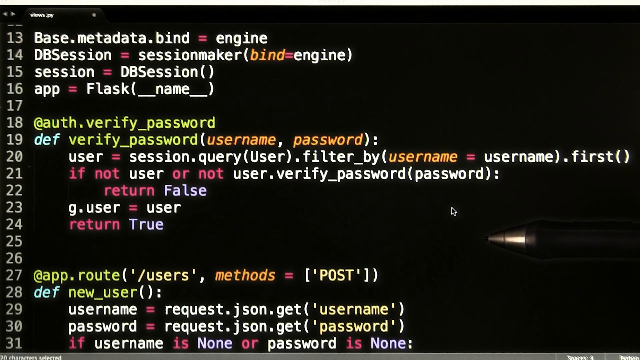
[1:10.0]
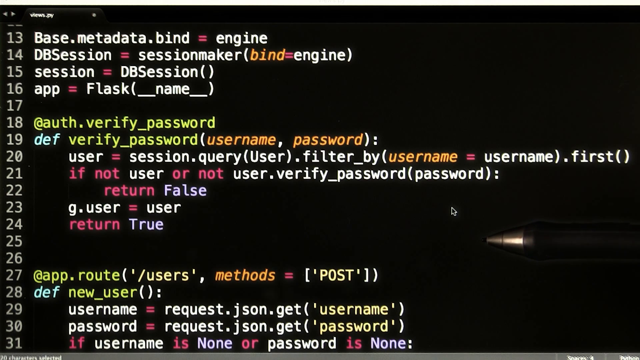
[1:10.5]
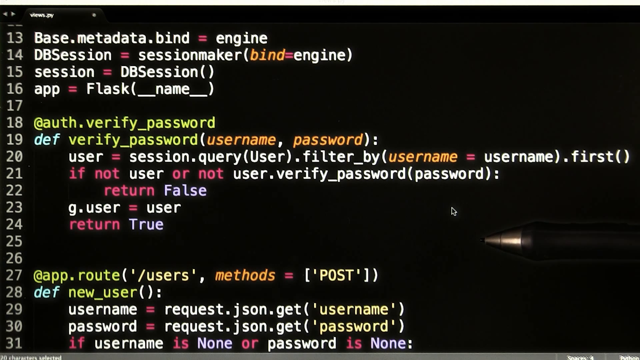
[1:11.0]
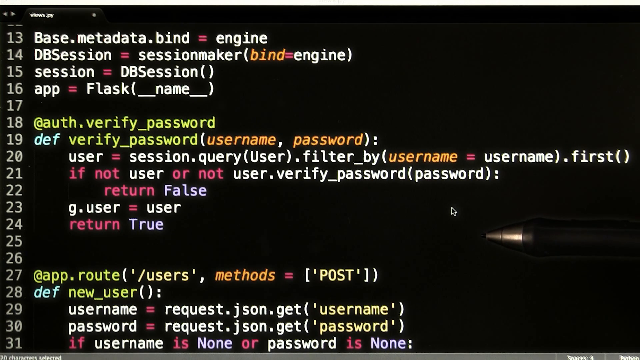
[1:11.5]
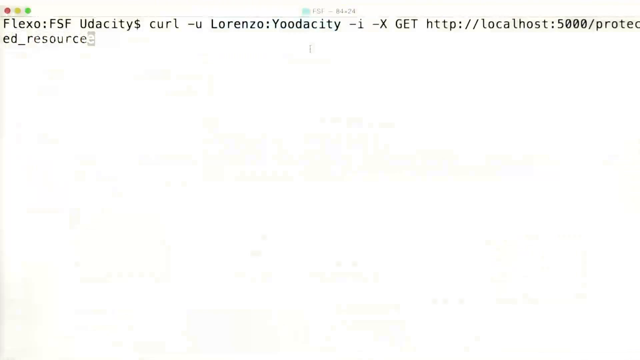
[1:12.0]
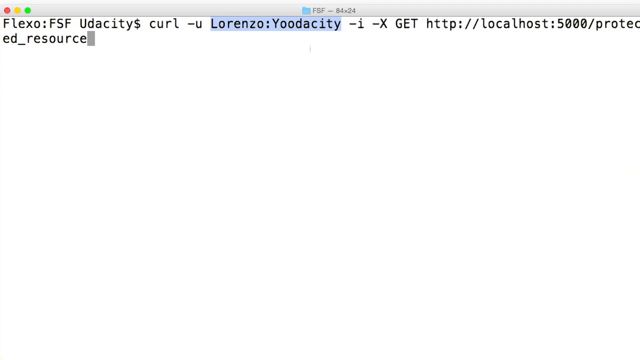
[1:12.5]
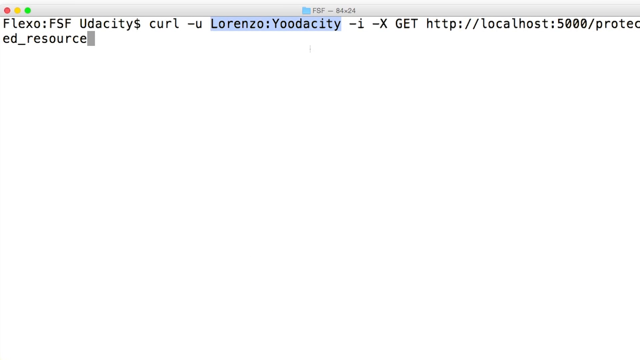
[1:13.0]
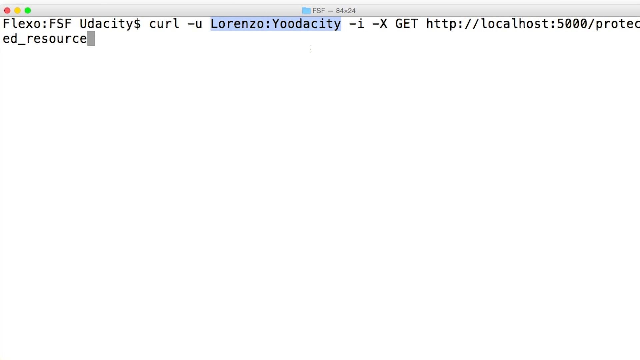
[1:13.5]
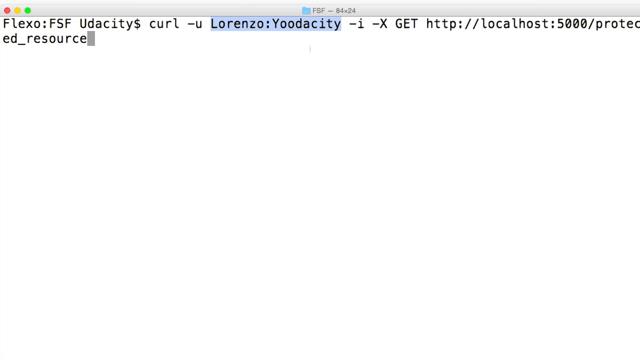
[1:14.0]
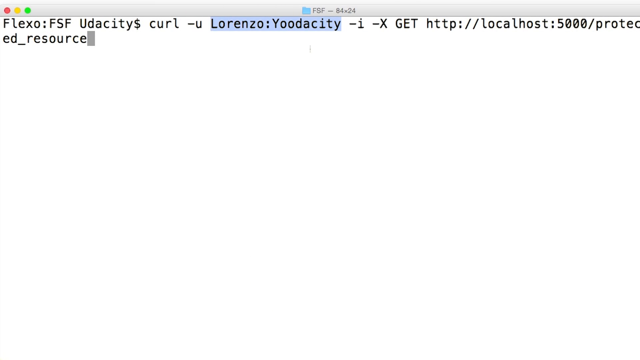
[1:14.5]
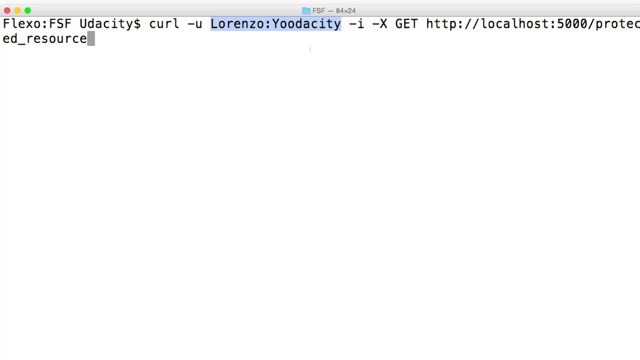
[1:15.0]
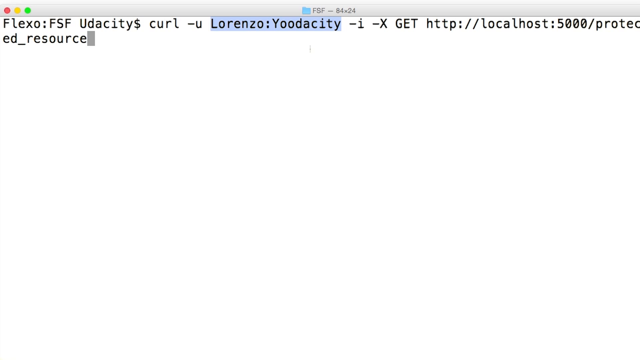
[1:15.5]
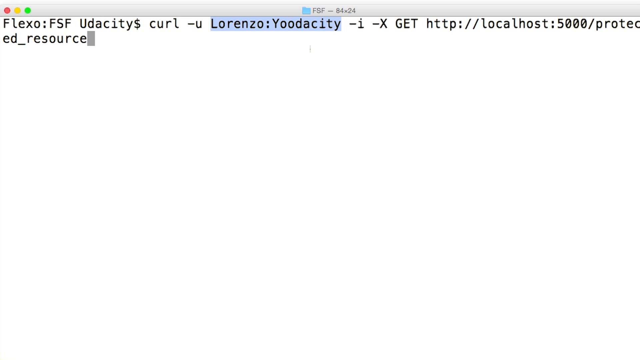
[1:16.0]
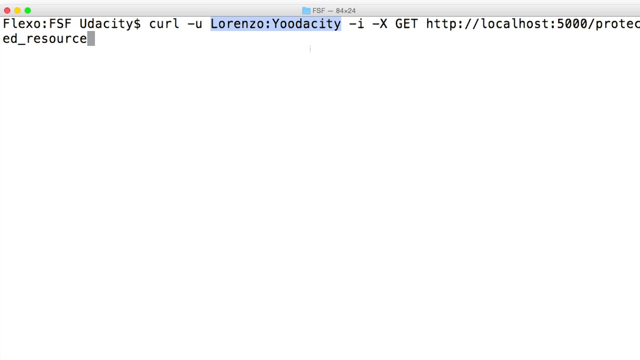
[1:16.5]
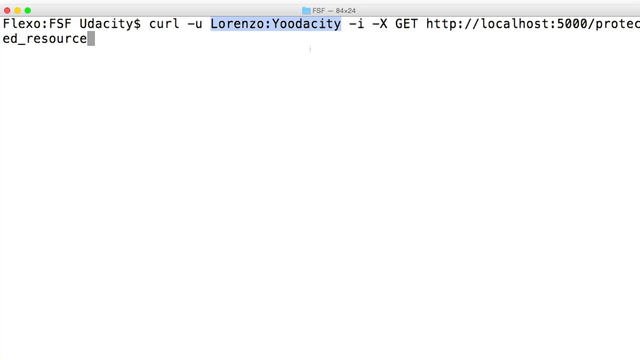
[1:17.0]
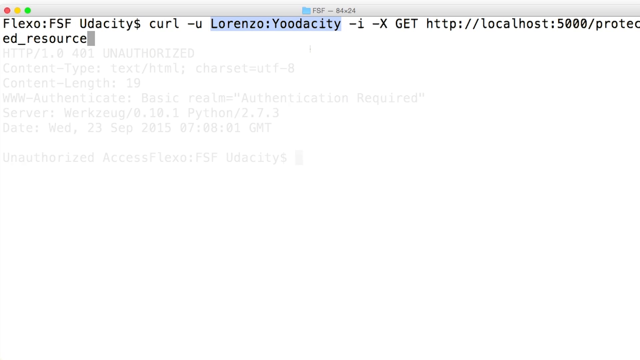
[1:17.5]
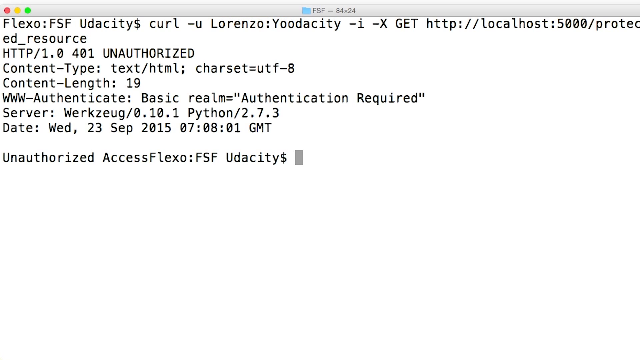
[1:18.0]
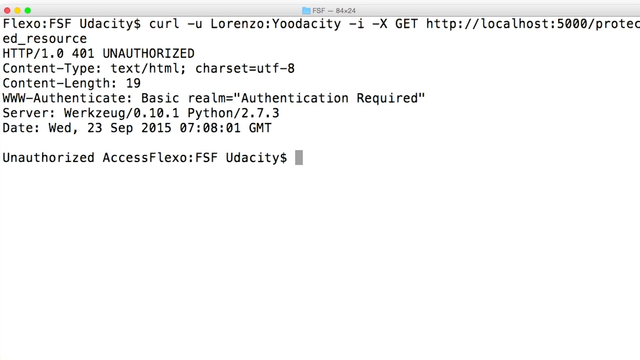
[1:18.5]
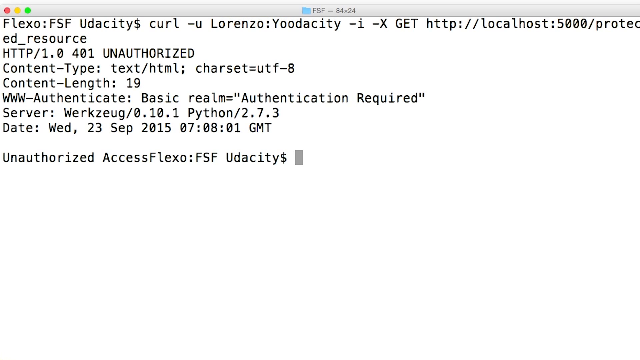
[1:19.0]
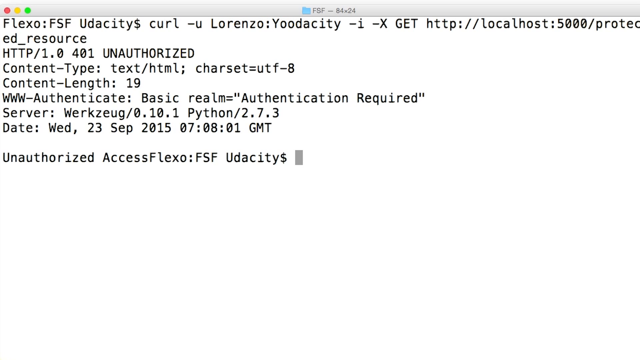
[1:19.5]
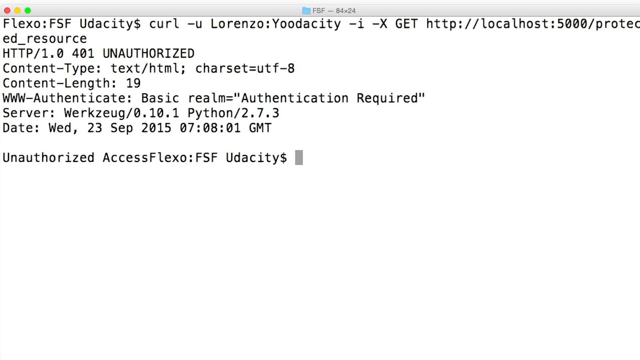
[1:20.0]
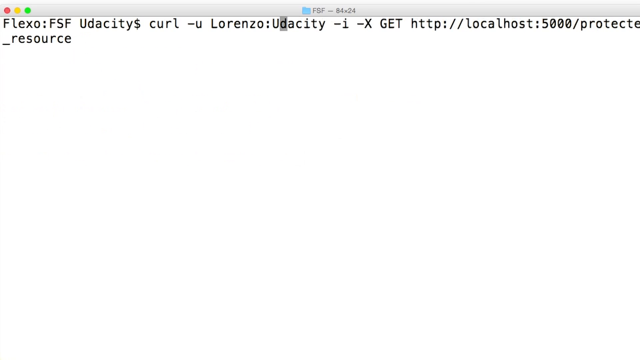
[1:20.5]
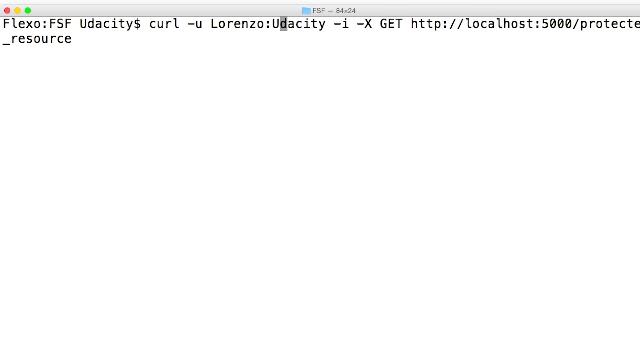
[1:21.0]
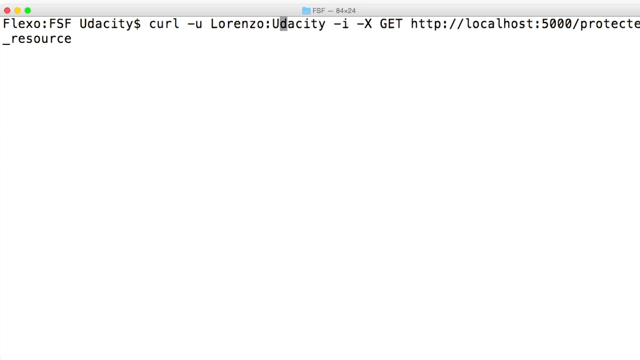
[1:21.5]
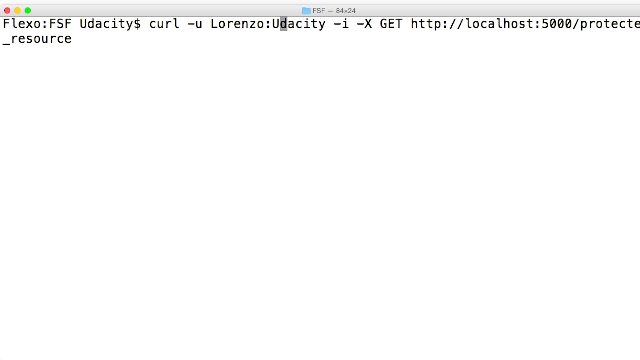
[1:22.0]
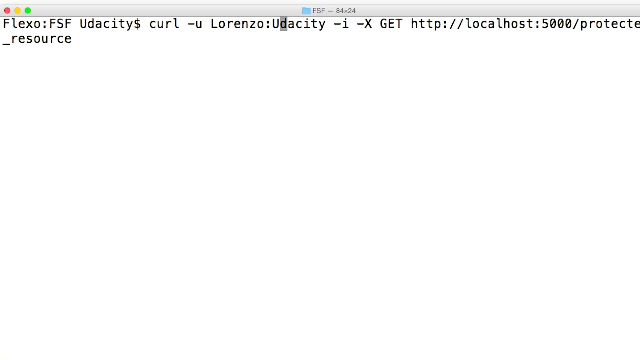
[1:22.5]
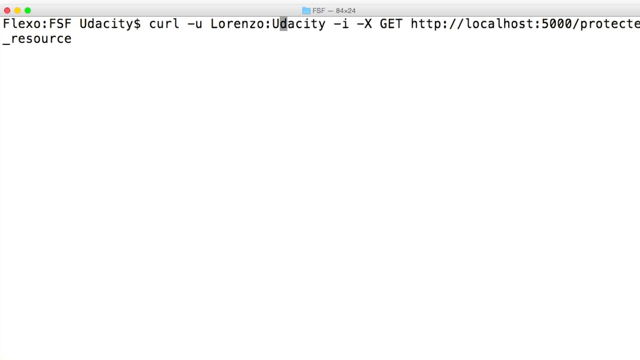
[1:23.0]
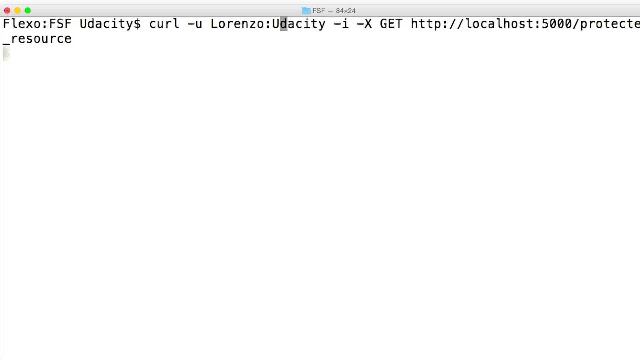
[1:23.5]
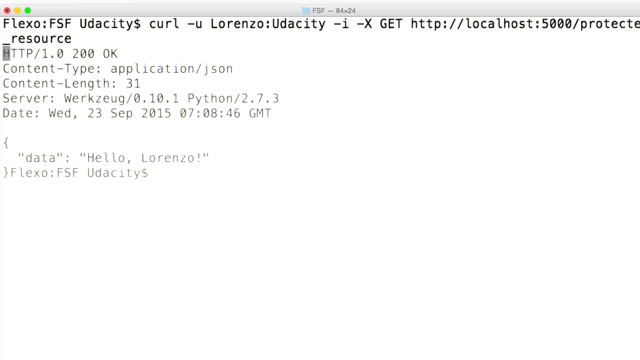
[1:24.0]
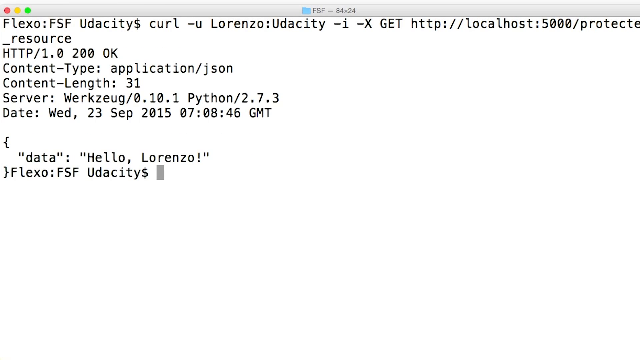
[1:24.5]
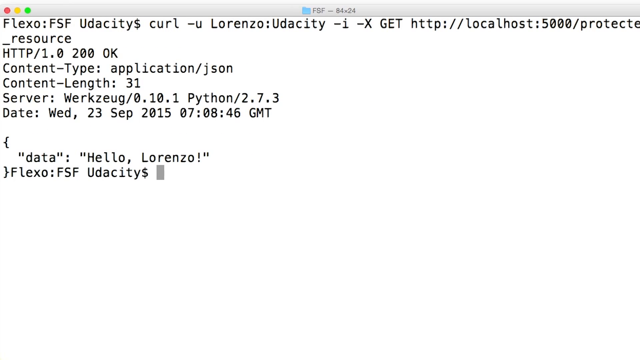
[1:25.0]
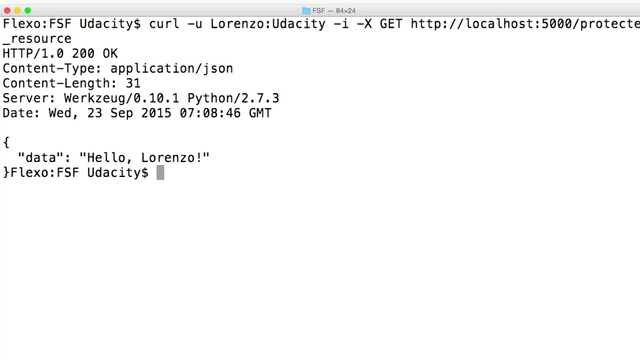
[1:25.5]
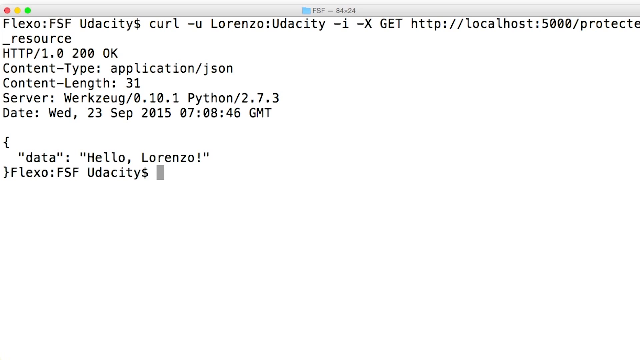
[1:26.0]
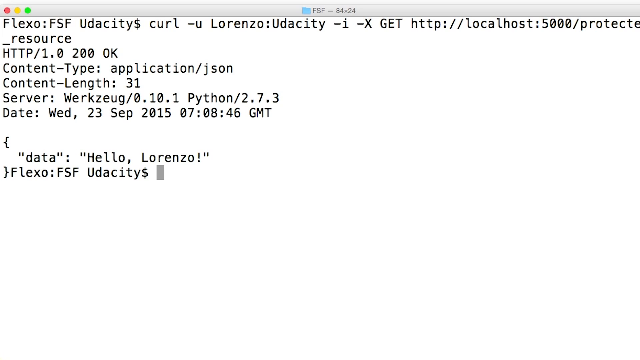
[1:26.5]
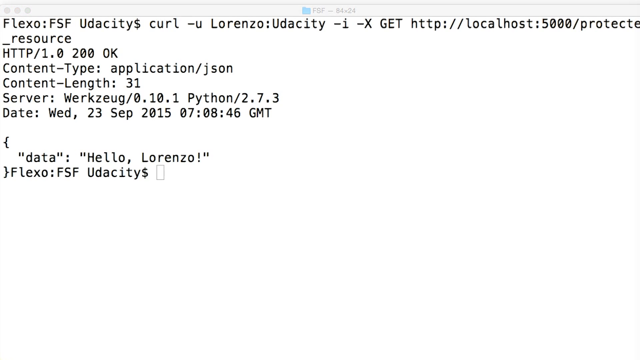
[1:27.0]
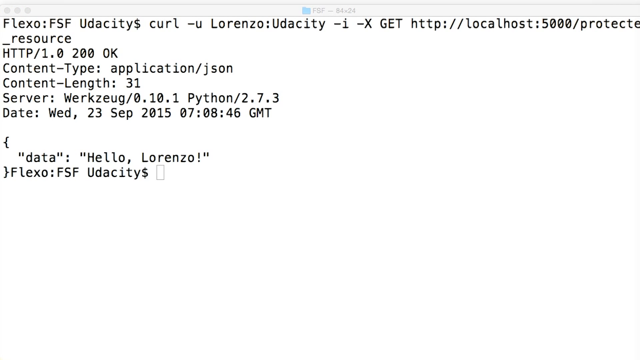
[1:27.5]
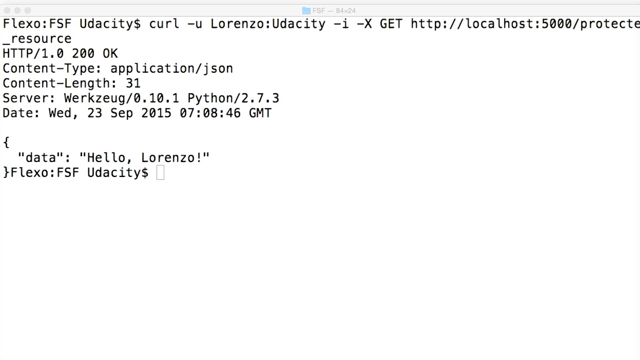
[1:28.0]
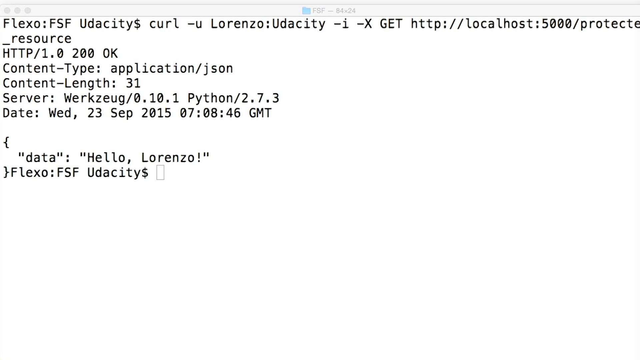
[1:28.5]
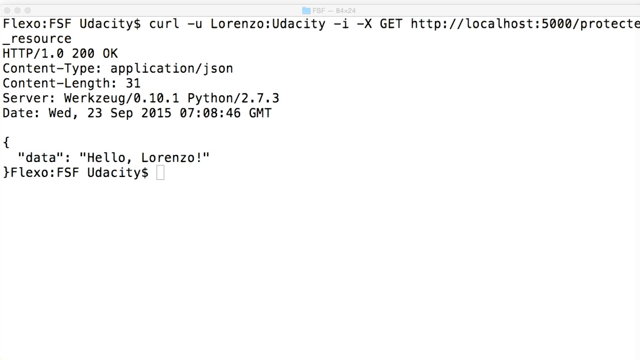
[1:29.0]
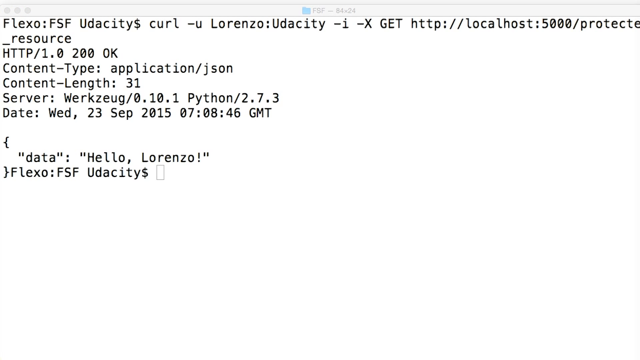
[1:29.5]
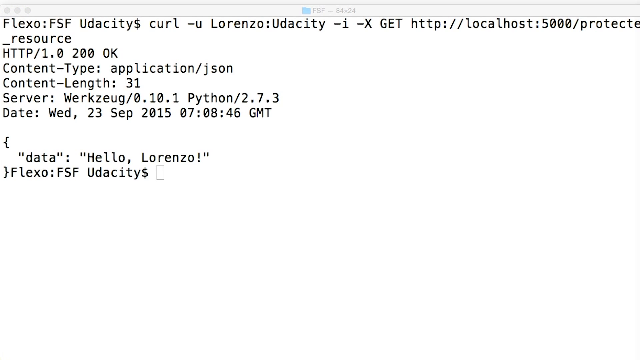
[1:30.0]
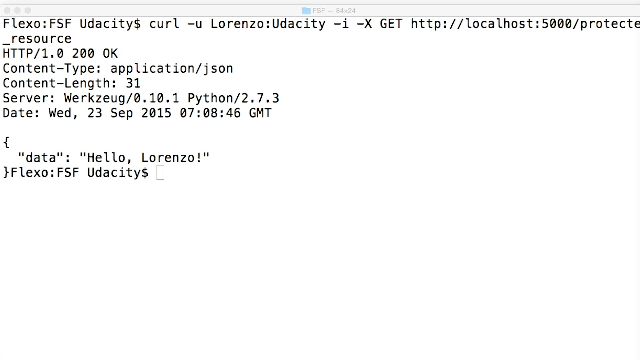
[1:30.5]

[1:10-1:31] A black background is filled with lots of text on lines numbered 13 down to 30, each line with different text. Some have capital letters, some equal signs, some brackets, and the font colours are pink, white, orange and yellow, with a little bit of blue. On the right-hand side is a black pen with no one visibly holding it. It lies horizontally about three quarters of the way down the page, lining up with line 25. About a quarter of the pen is visible, the tip section, which has a silver tip and a black section for holding. The pen hovers a little, as though it has touched the screen, and the background changes to white. A word is highlighted in a grey shade, and the writing continues further down: six lines, a blank line, and one more line. A little grey box is at the side of the word "Udacity" on the right-hand side of the page, about halfway down the screen.